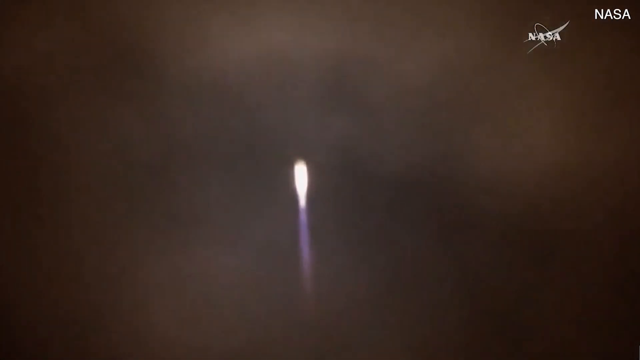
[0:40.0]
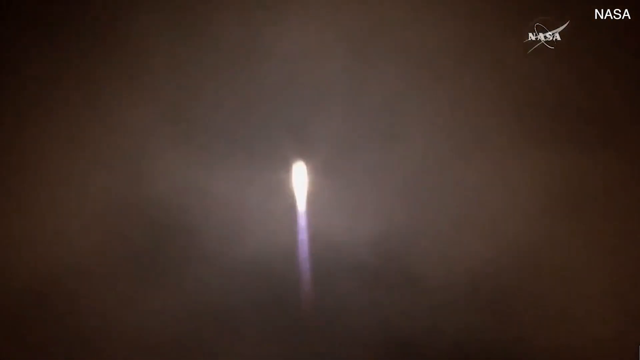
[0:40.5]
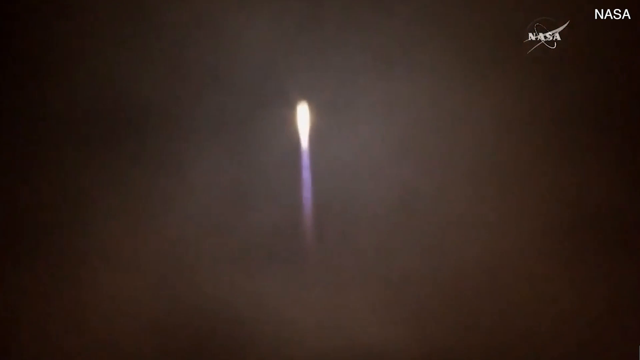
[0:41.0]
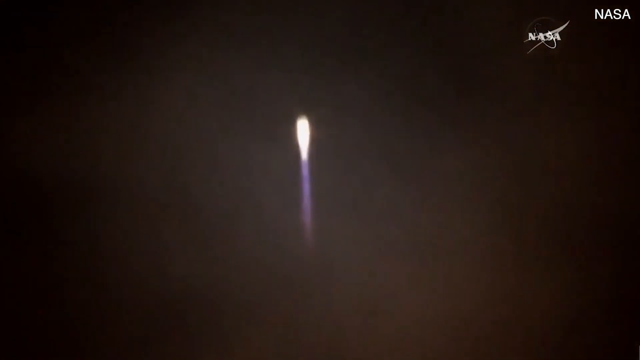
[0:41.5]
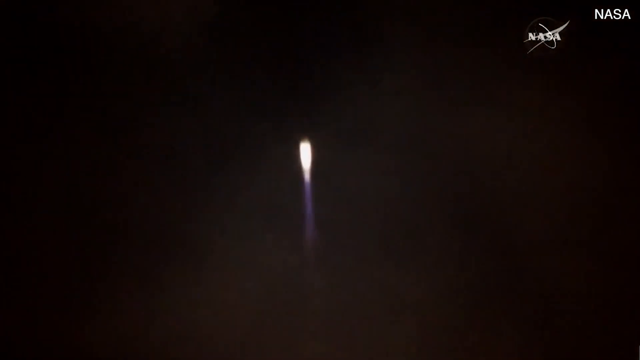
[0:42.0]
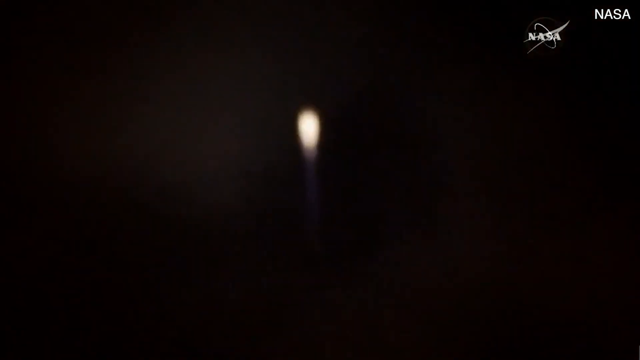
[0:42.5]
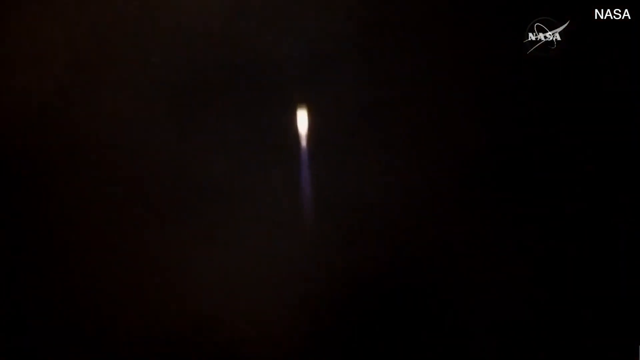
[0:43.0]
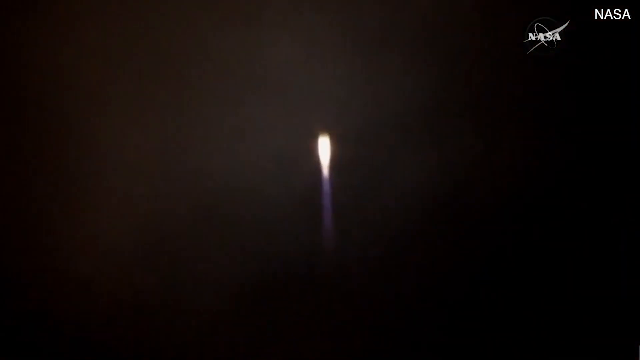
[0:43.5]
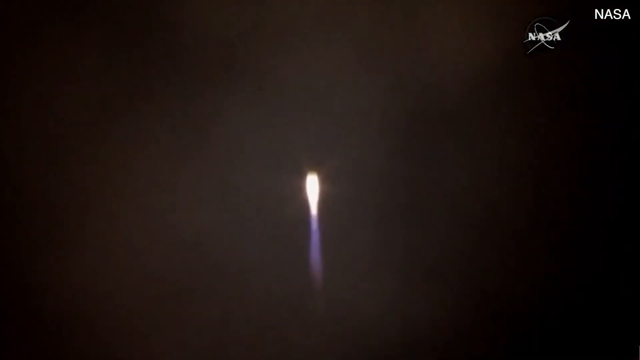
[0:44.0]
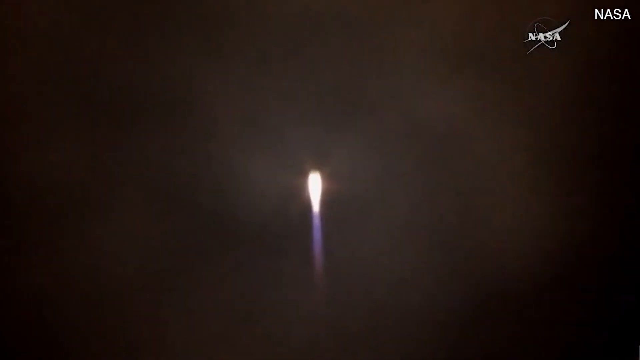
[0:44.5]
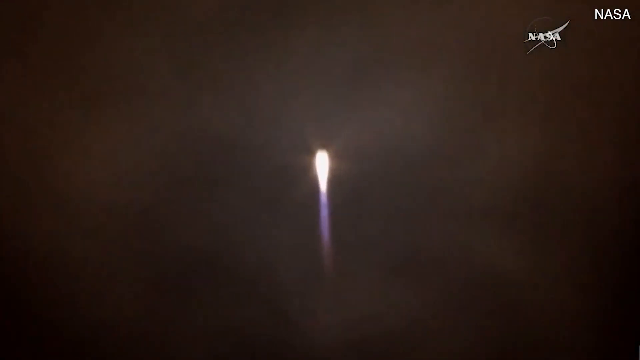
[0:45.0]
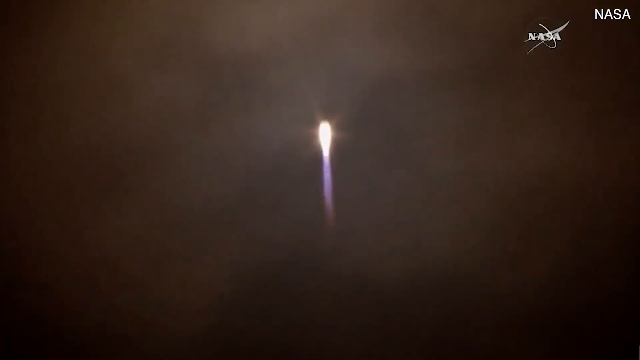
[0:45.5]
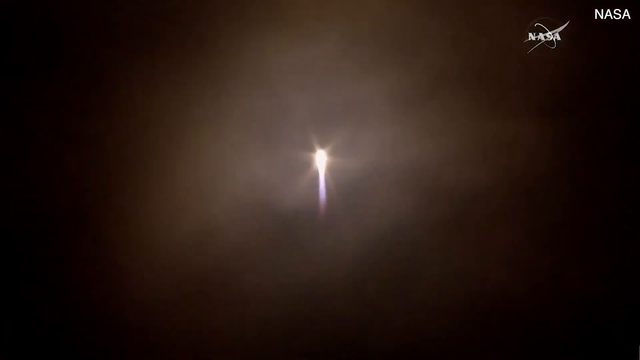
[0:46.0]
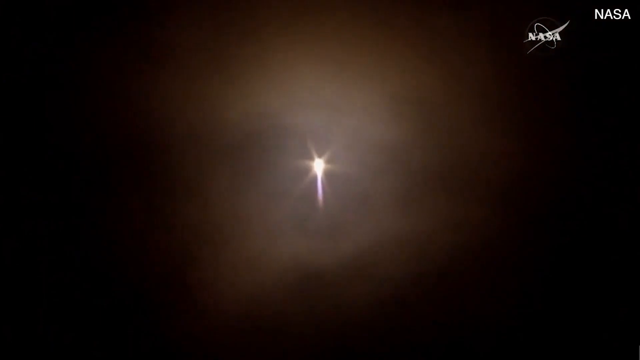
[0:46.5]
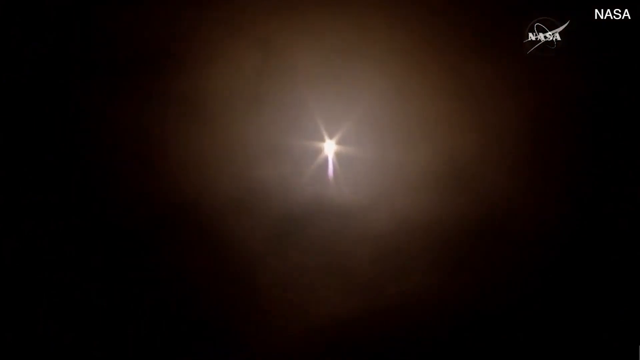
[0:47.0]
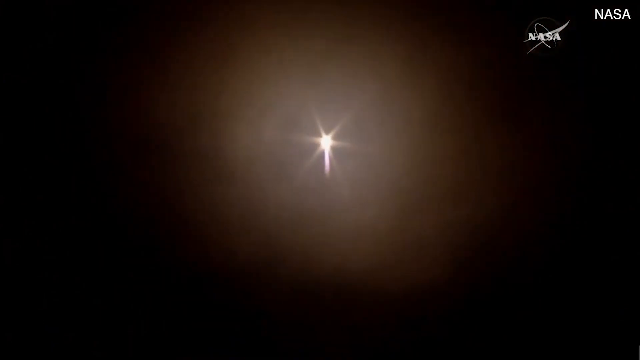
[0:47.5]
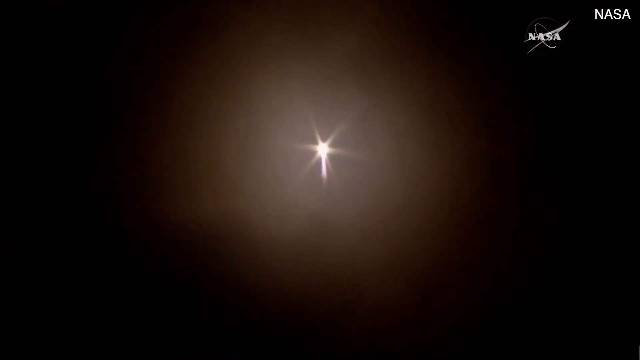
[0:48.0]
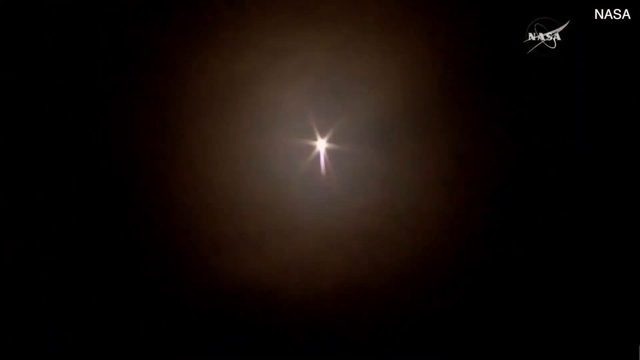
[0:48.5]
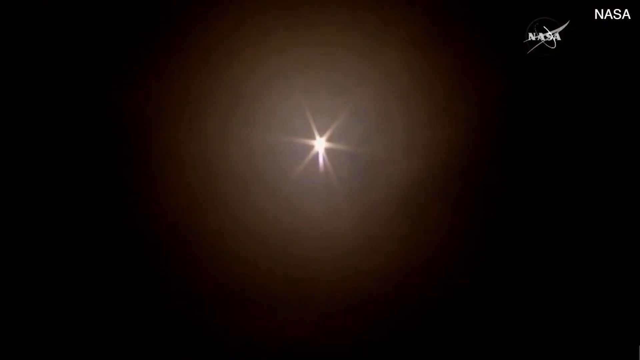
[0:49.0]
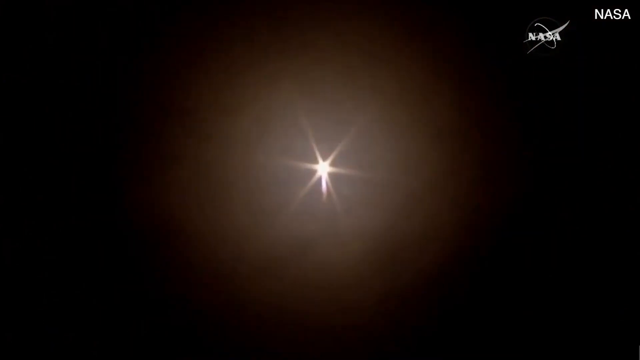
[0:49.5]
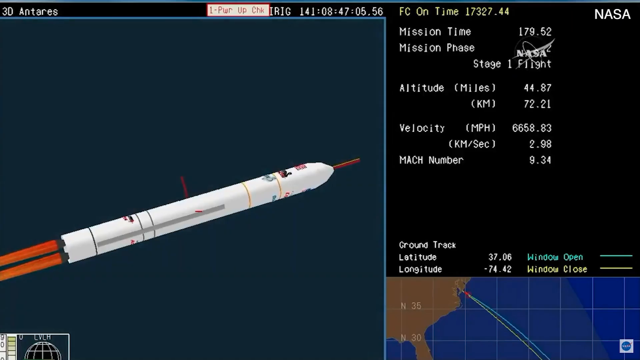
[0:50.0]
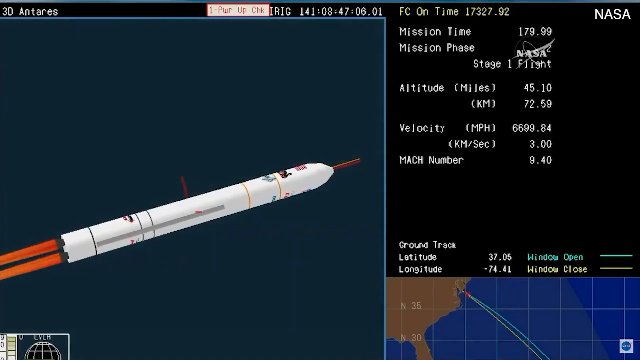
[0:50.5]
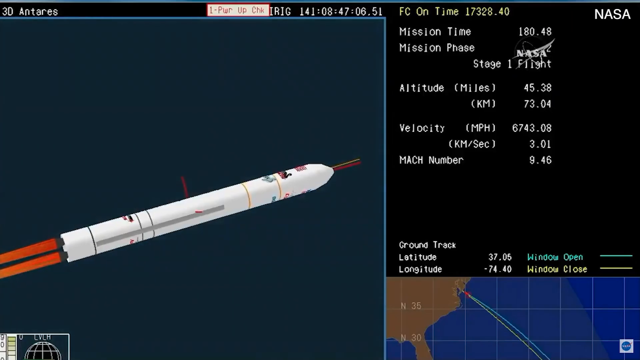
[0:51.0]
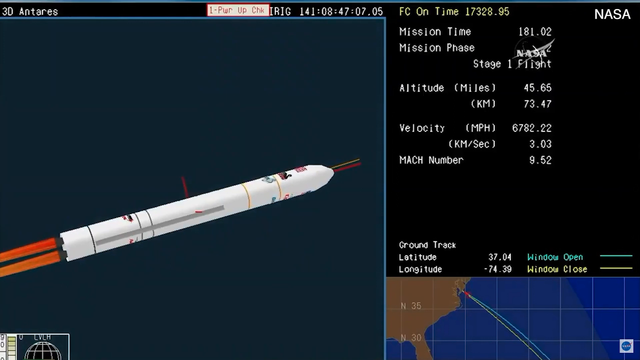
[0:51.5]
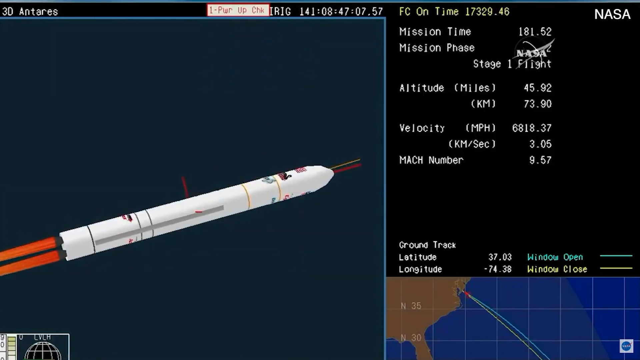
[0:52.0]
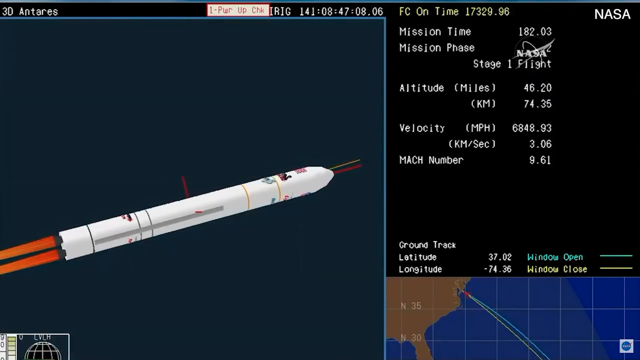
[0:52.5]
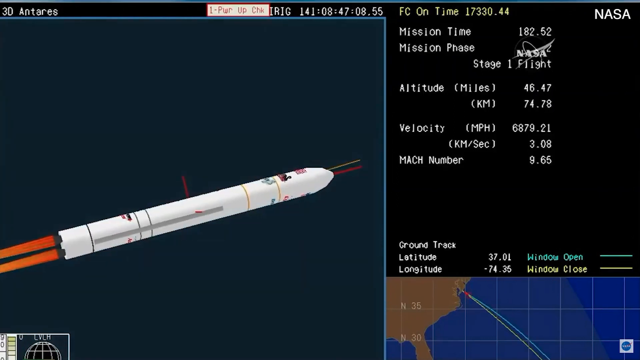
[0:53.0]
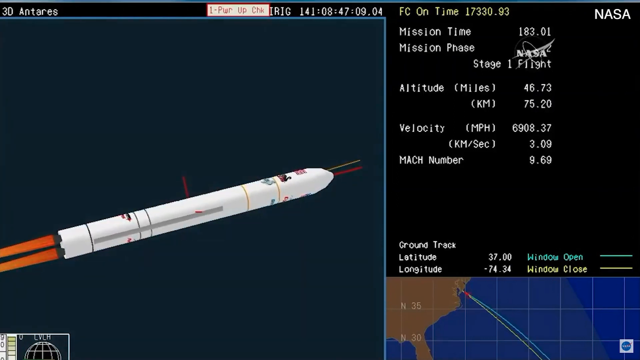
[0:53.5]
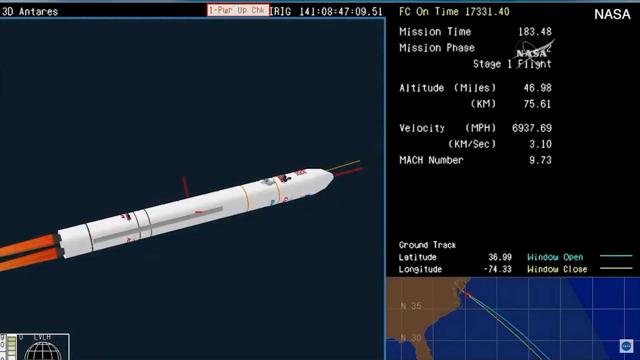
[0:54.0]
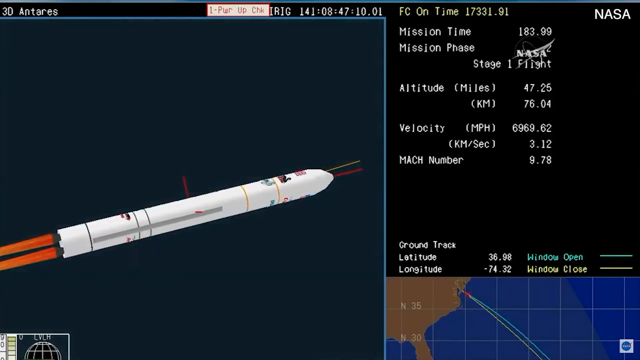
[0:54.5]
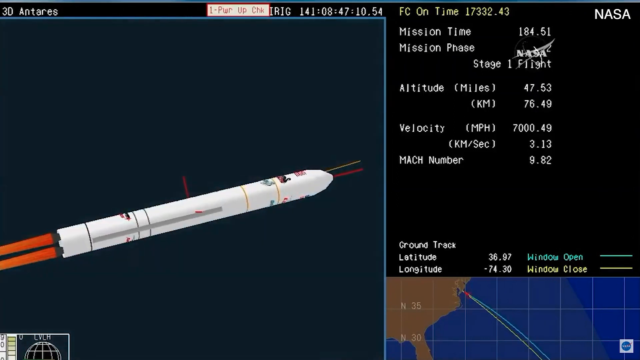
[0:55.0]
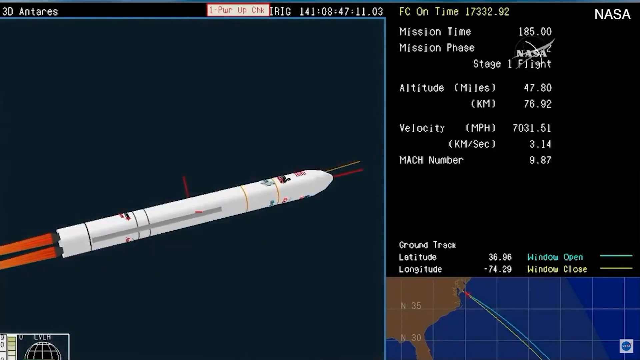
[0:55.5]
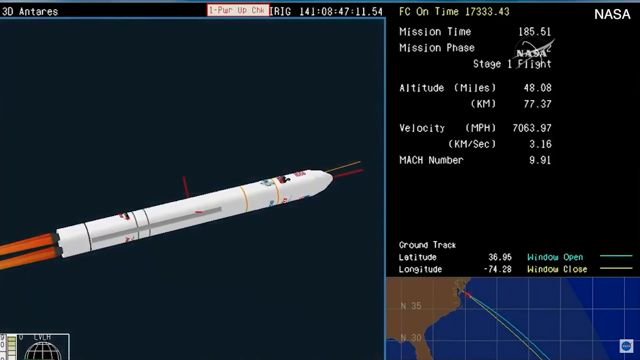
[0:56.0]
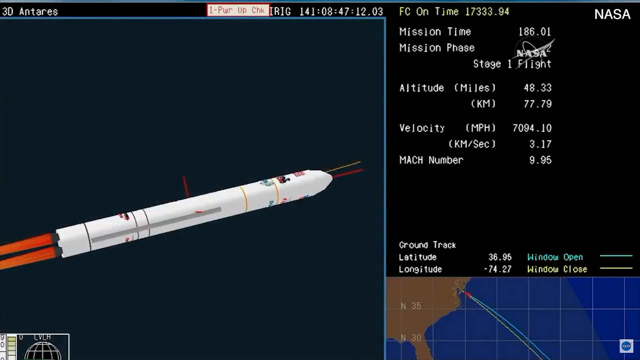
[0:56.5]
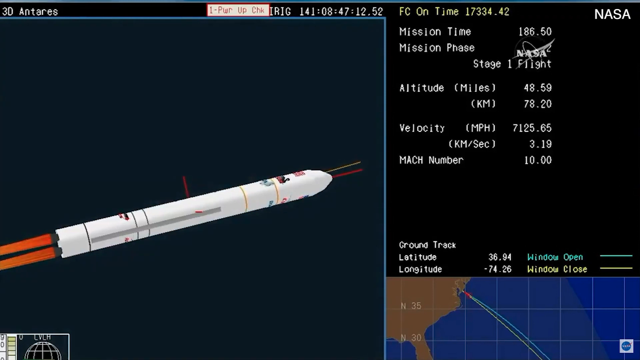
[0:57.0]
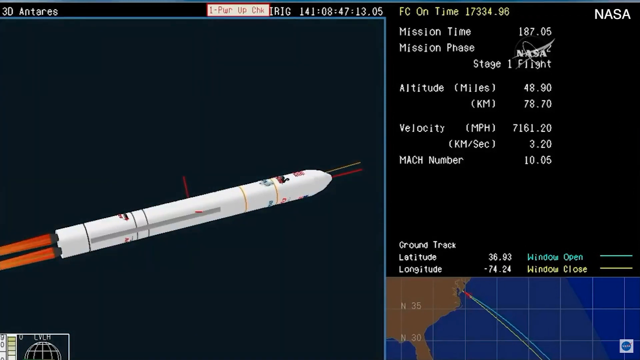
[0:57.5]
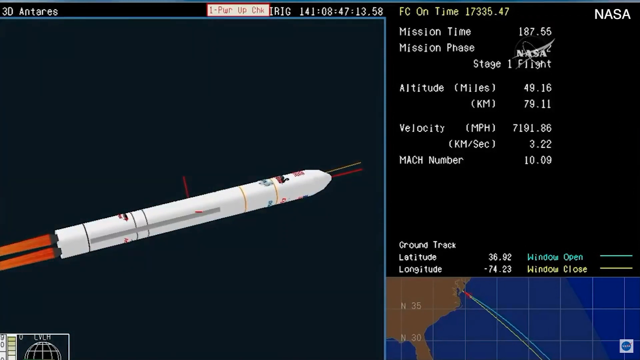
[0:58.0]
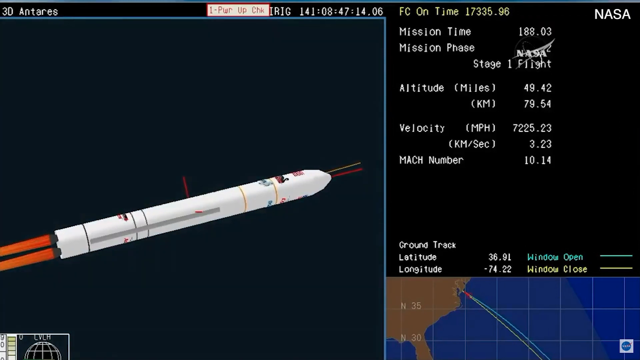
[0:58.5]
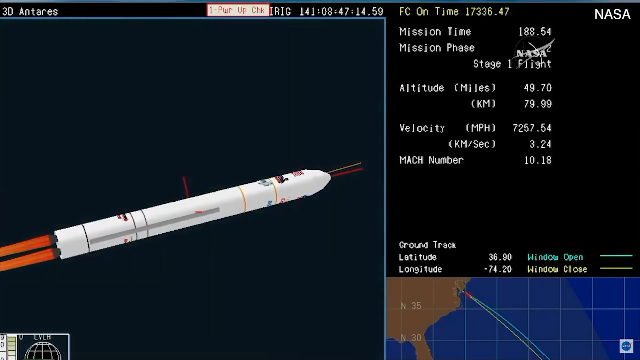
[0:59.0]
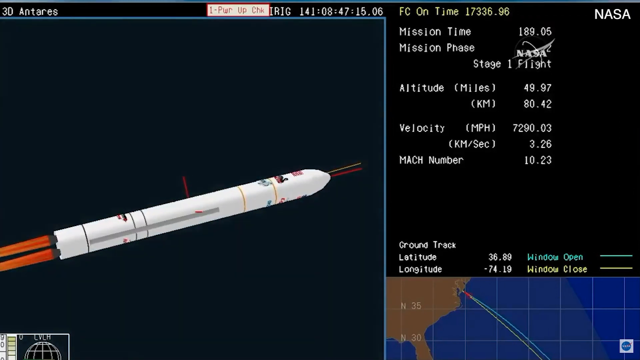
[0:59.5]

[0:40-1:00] The rocket blasts upward at a very fast rate. Various numbers appear, relating to how fast the rocket is launching. The bright light of the launch contrasts with the dark background.